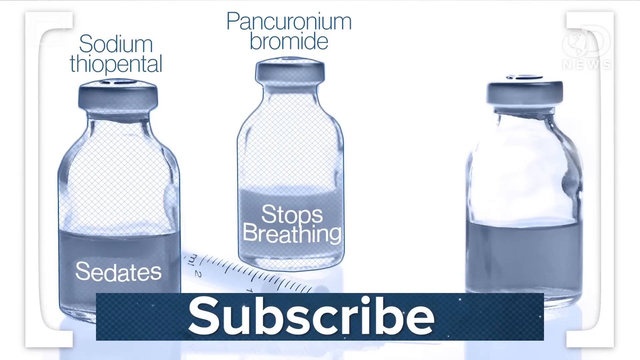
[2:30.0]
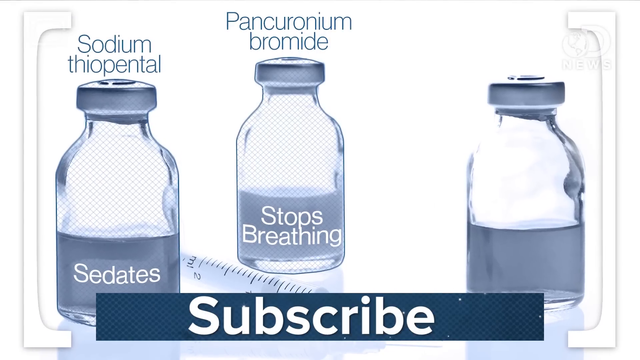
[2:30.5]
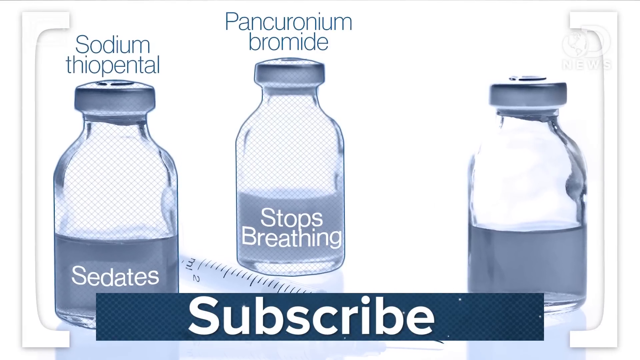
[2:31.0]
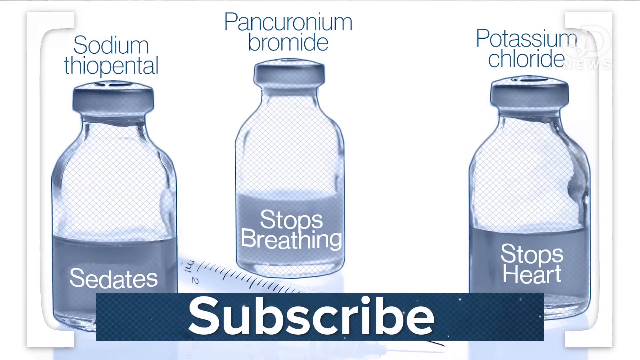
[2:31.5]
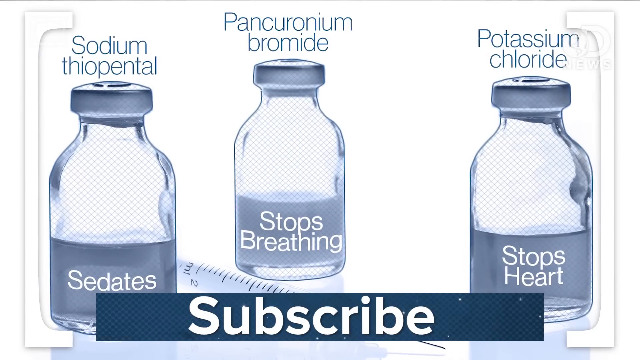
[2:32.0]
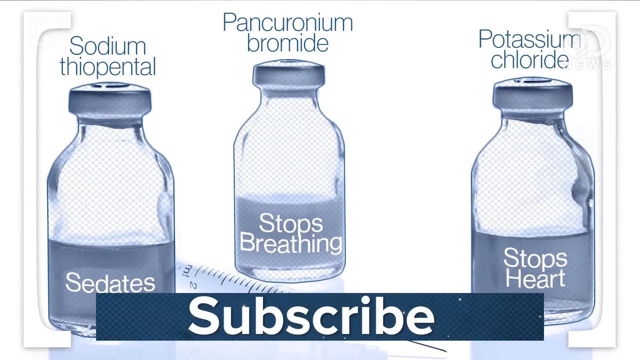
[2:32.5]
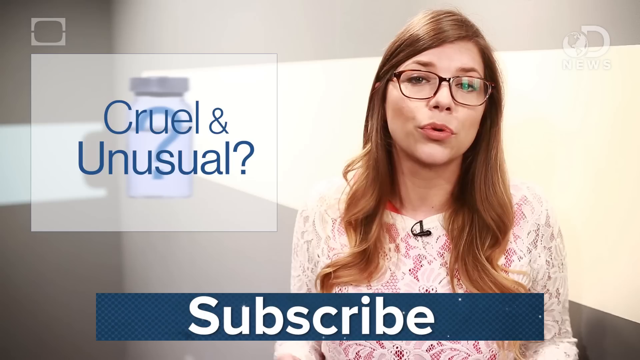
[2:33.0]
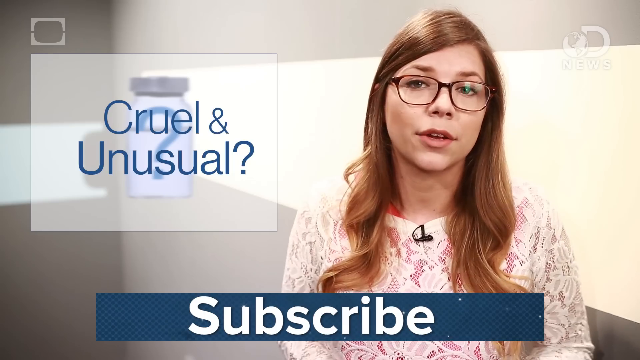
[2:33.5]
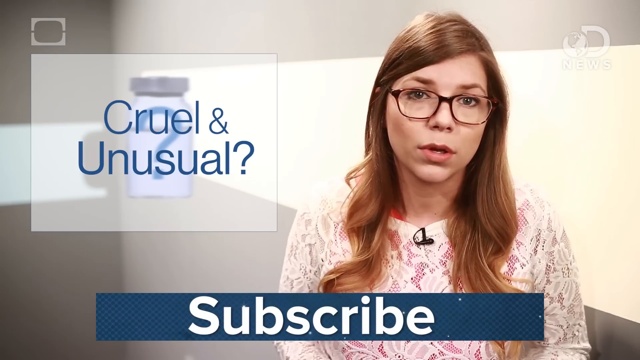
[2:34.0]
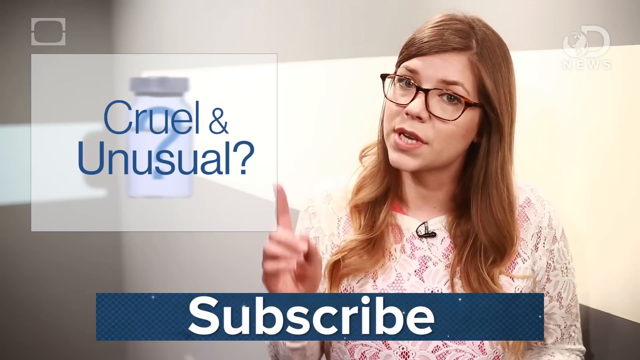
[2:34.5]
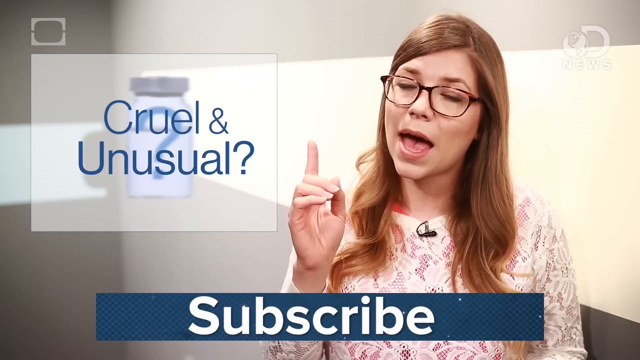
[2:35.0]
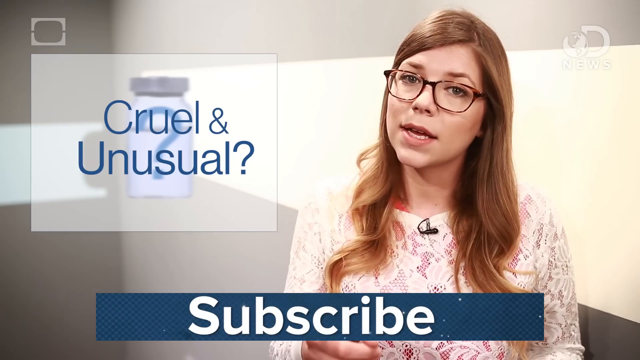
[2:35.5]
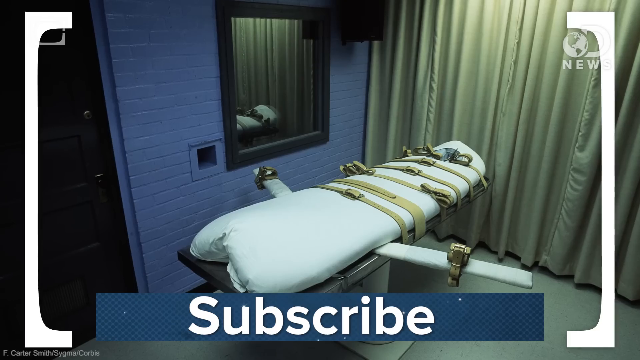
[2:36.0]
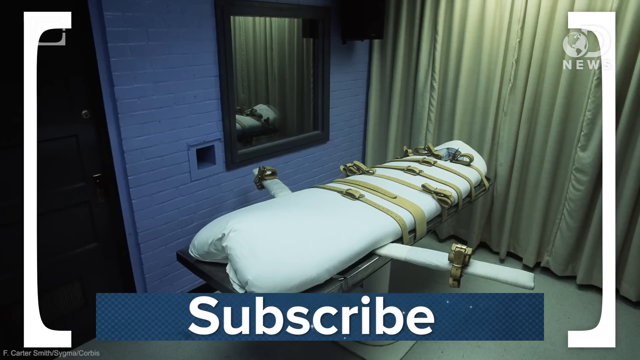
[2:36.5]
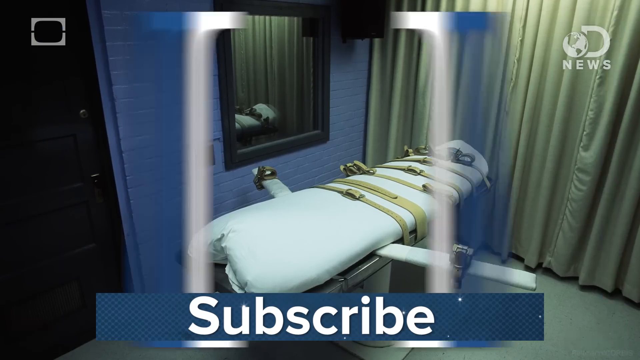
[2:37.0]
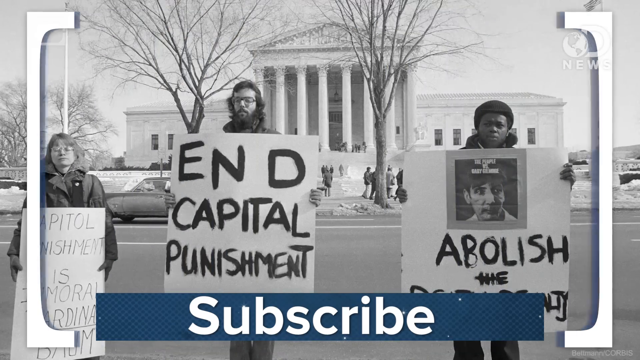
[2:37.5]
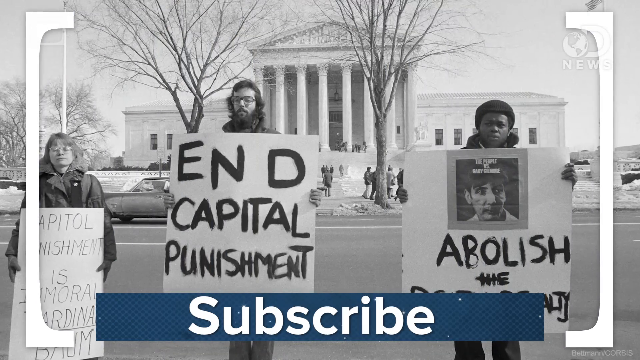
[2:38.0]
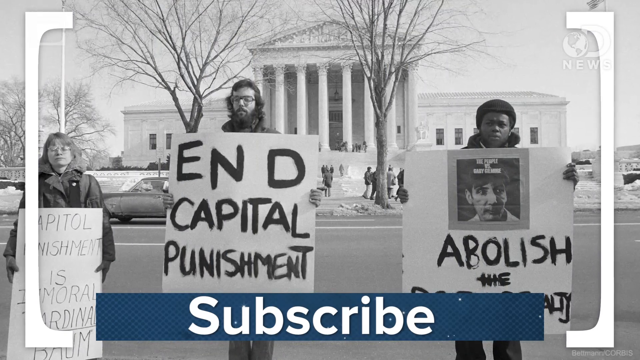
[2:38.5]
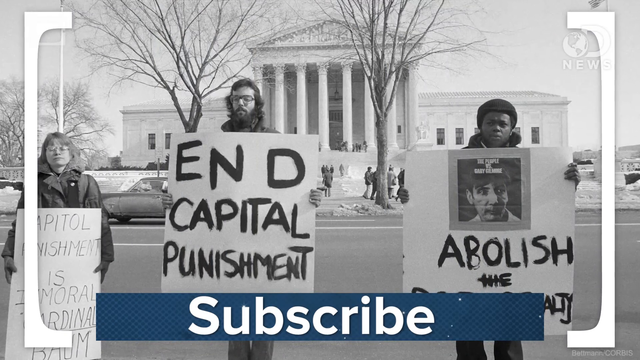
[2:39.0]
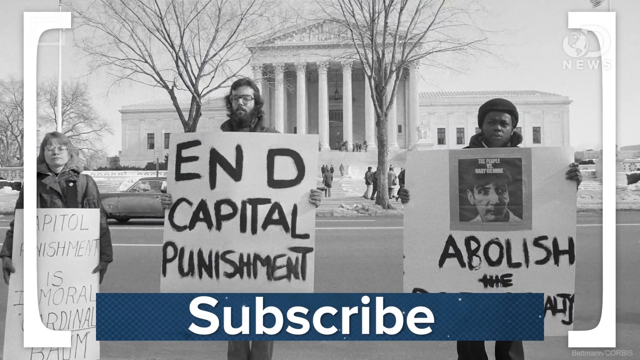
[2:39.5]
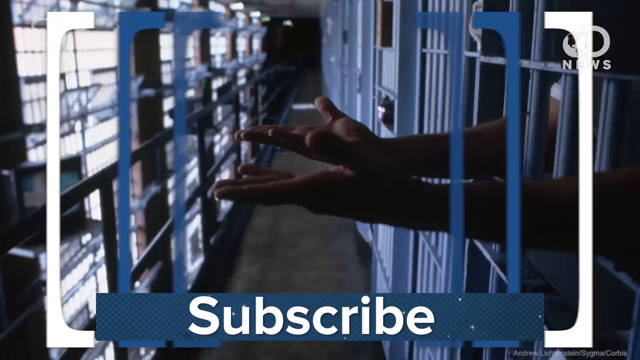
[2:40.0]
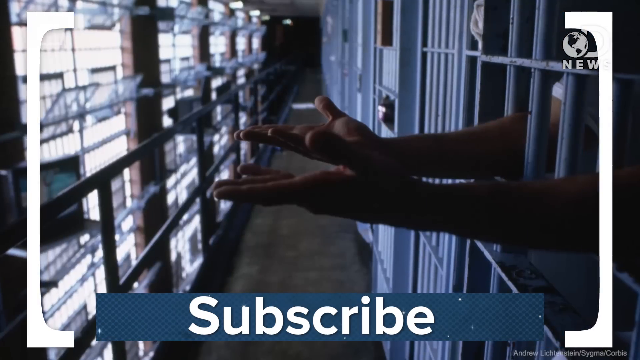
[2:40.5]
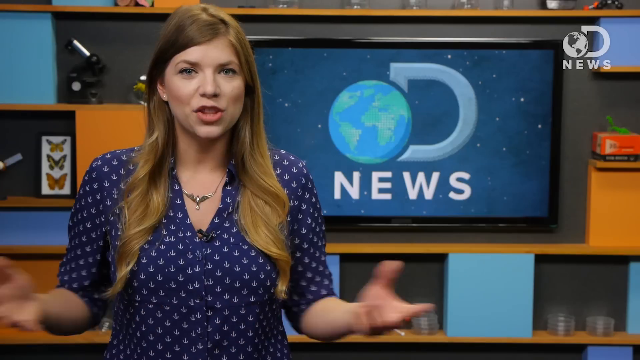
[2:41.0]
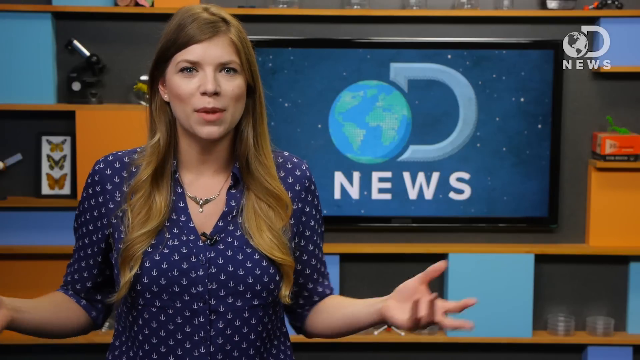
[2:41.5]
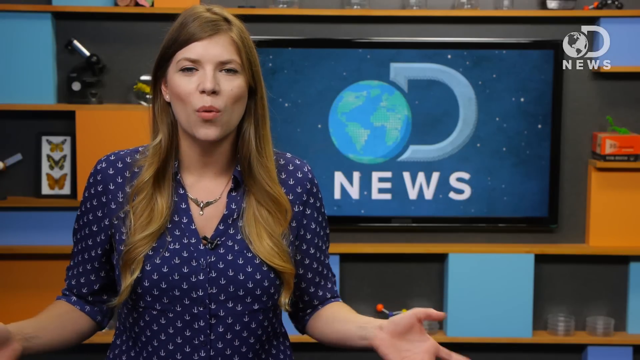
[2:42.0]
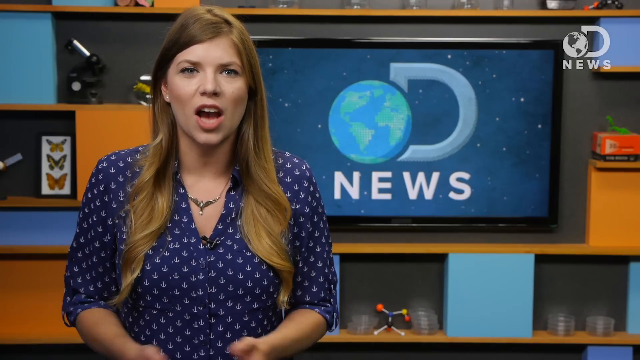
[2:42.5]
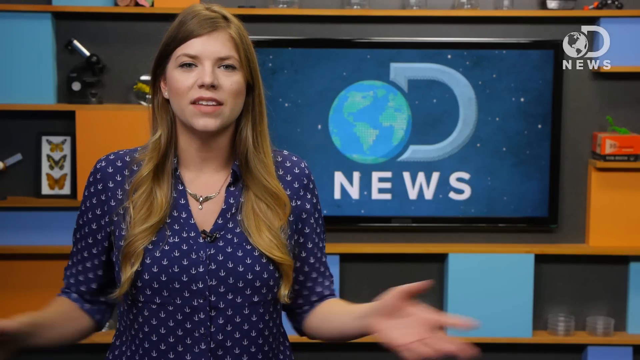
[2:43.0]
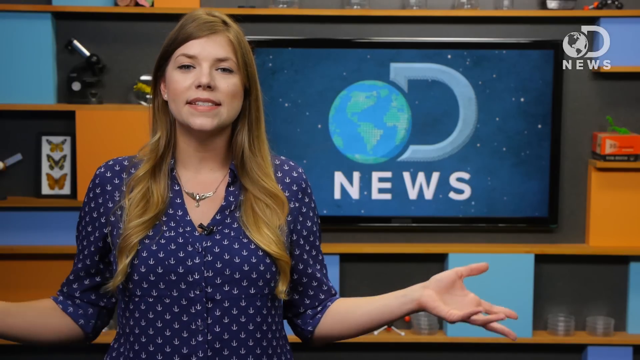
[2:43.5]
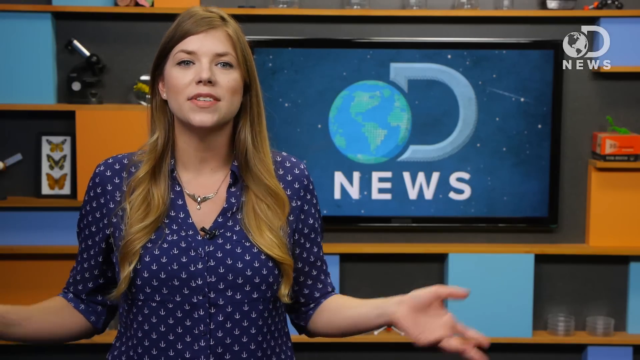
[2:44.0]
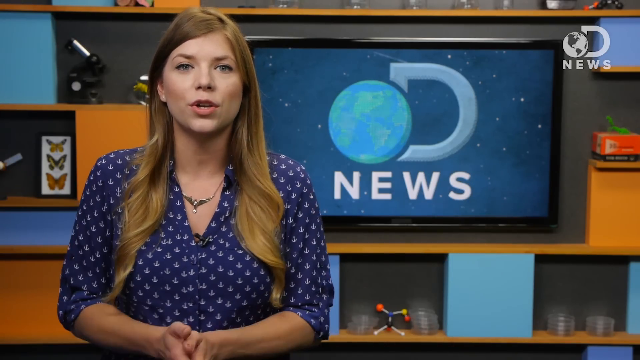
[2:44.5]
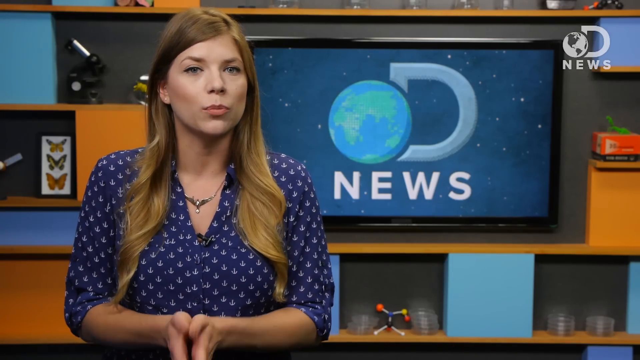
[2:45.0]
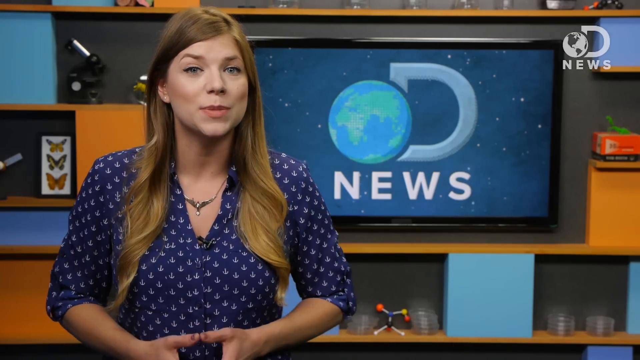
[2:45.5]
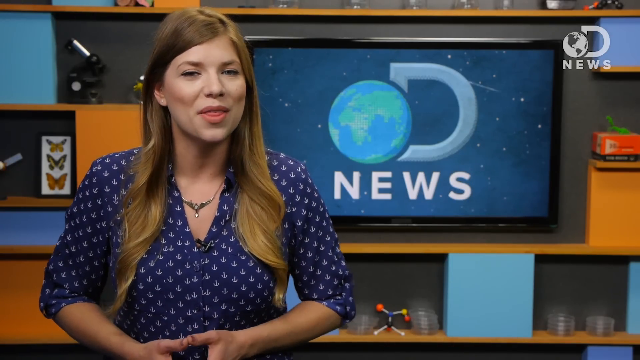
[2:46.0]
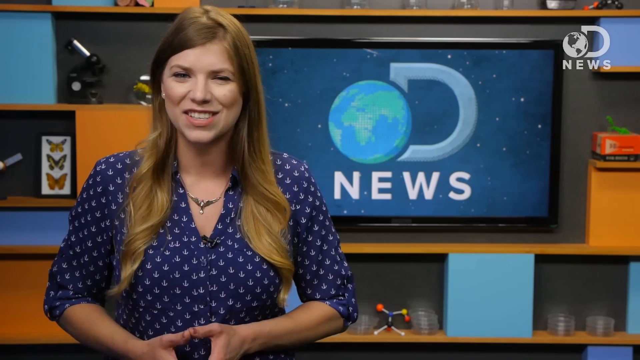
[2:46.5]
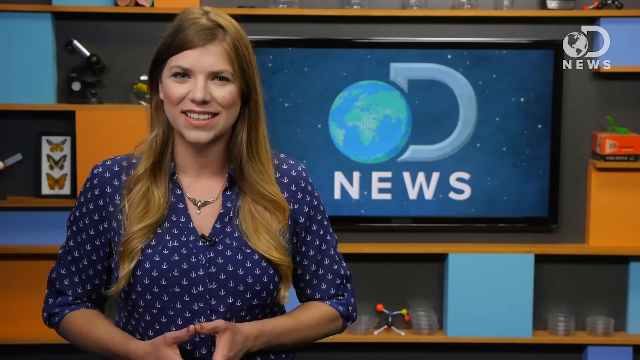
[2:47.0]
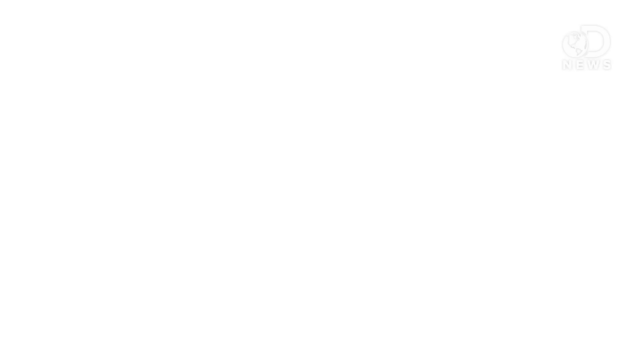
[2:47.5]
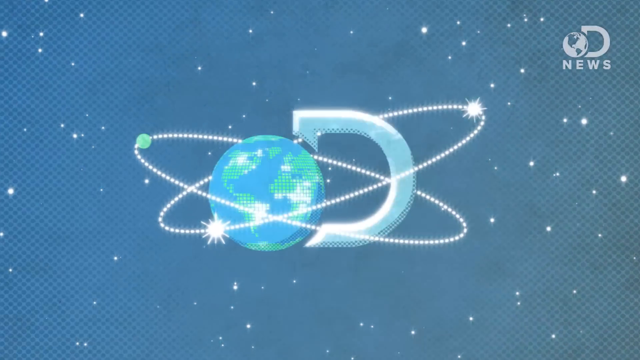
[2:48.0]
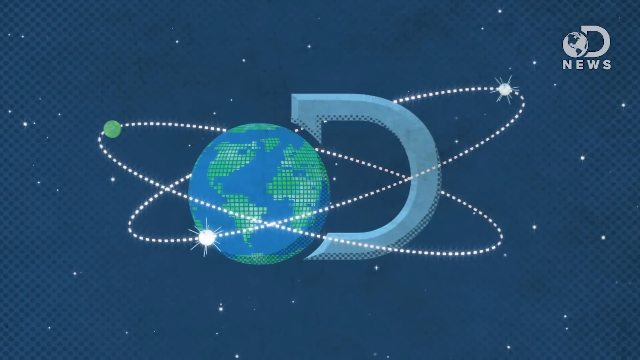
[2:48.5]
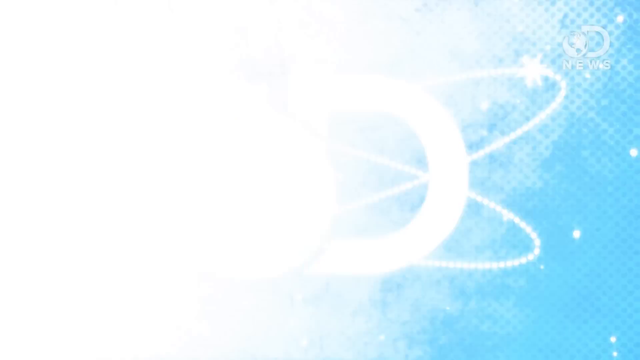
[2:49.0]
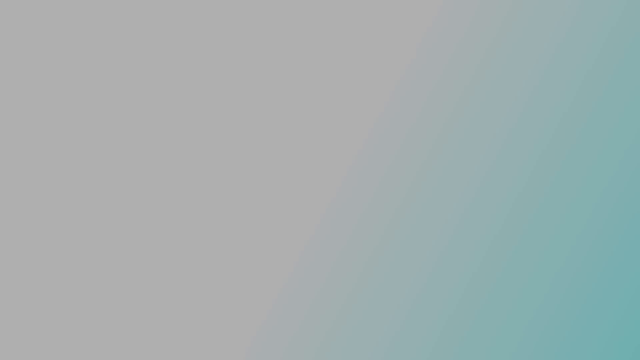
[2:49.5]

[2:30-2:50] Above the first bottle it says "sedates"; the middle bottle says "pancuronium bromide" at the top with "stops breathing" below; and the bottle at the very right says "potassium chloride" with "stops heart" at the bottom. On the left it says "cruel and unusual", and on the right are the long hair, glasses and white fabric, and people. There is supposedly some kind of medical table with belts, a curtain at the very back and a window on the left. White buildings are in the very back, with dead trees under a gray sky. Signs read "abolish" on the very right, "end capital punishment" in the middle and "capital punishment is criminal" on the left. Someone sticks their arms through a jail cell, palms facing up, wearing a shirt, with a railing on the left, open windows and visible cement. The woman is back in the studio, speaking animatedly and making many different faces.